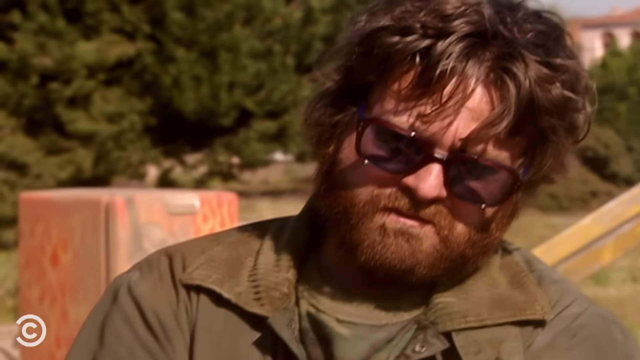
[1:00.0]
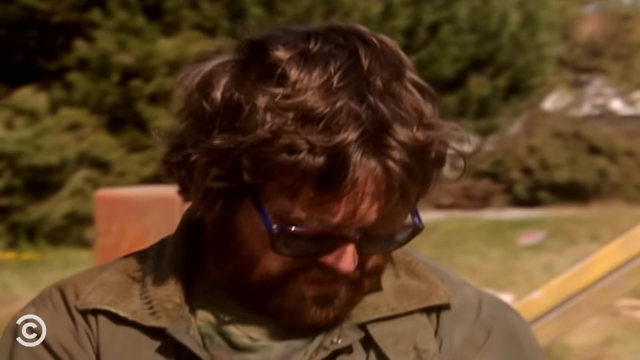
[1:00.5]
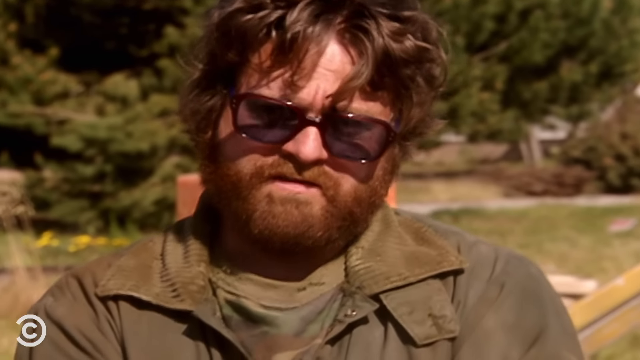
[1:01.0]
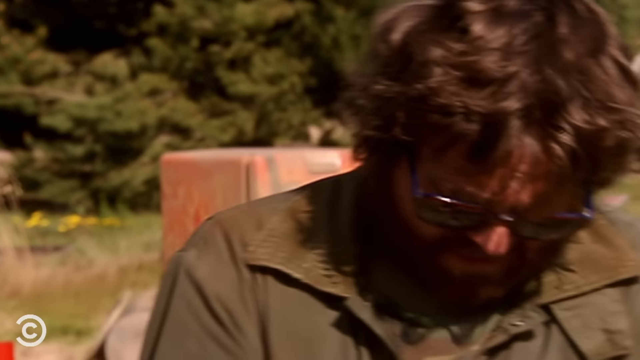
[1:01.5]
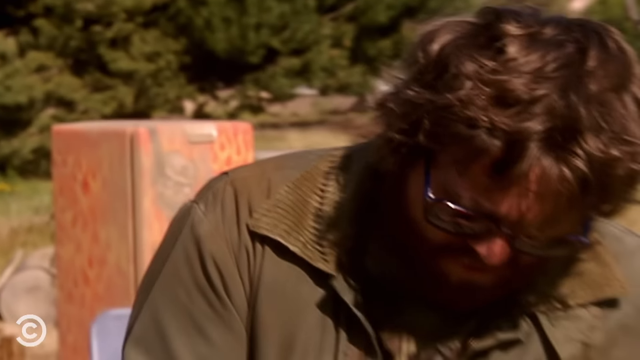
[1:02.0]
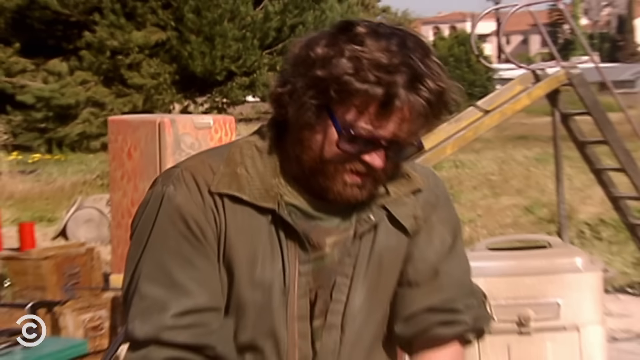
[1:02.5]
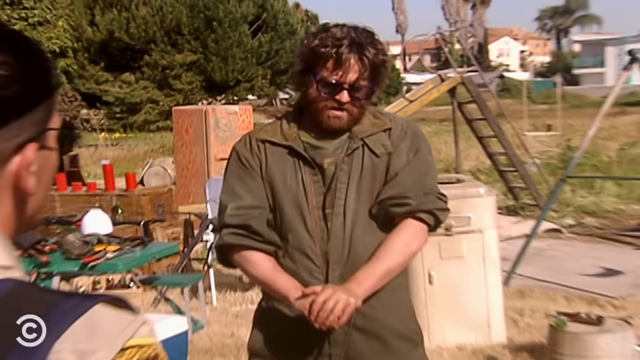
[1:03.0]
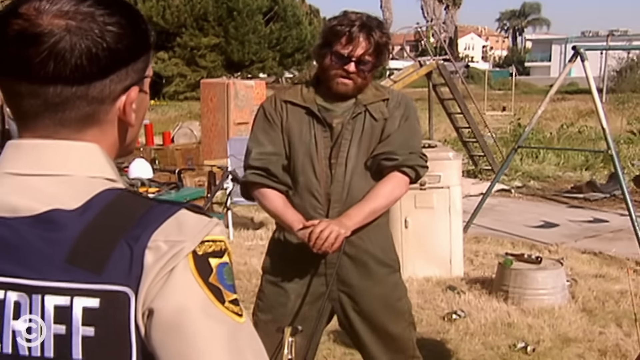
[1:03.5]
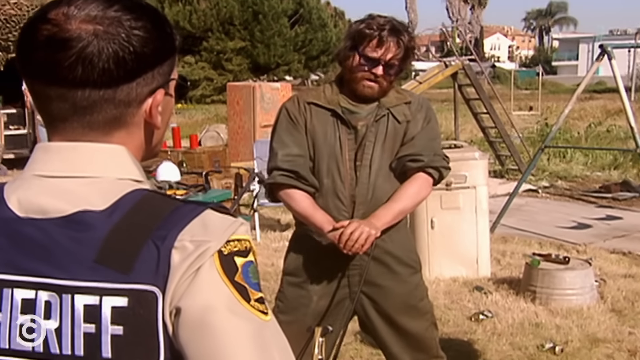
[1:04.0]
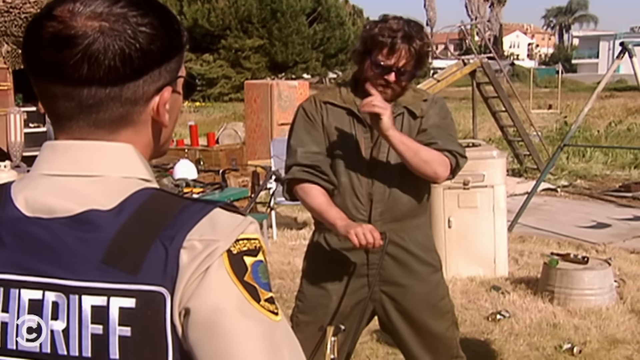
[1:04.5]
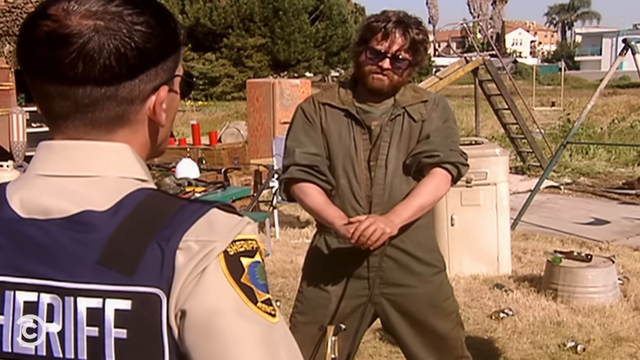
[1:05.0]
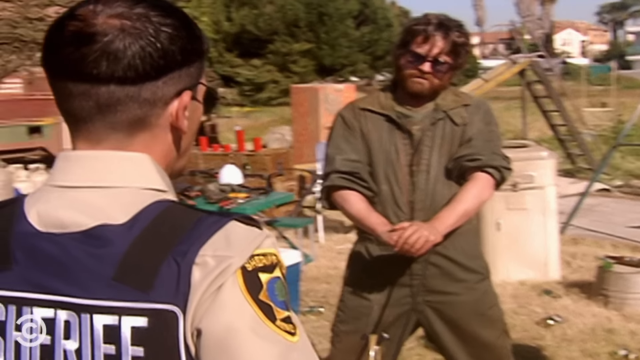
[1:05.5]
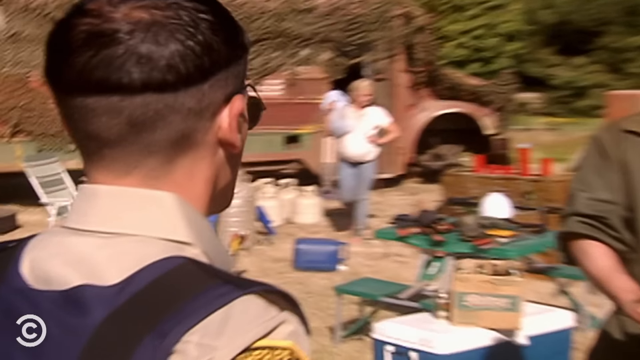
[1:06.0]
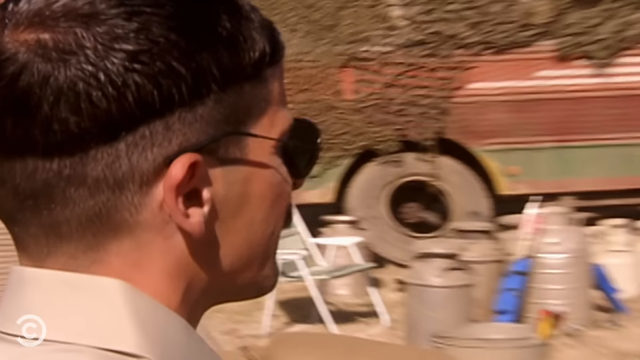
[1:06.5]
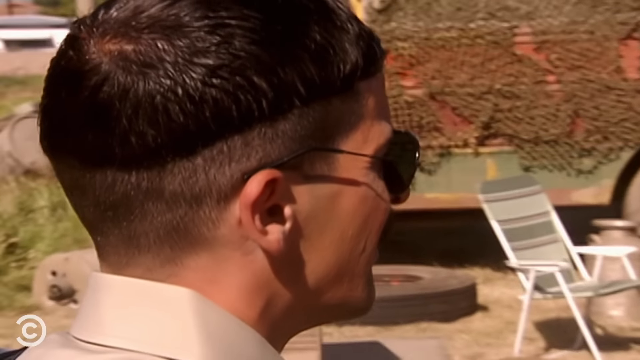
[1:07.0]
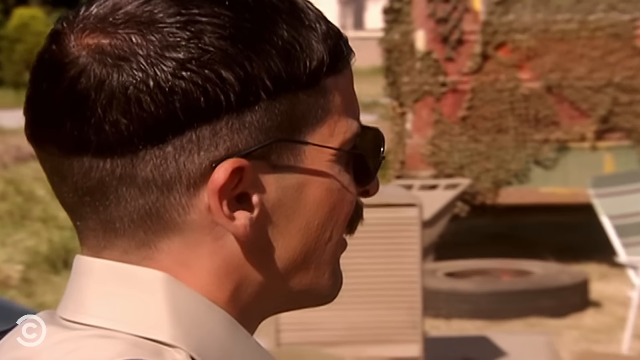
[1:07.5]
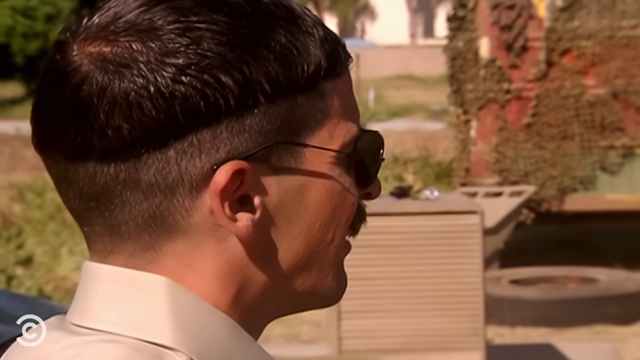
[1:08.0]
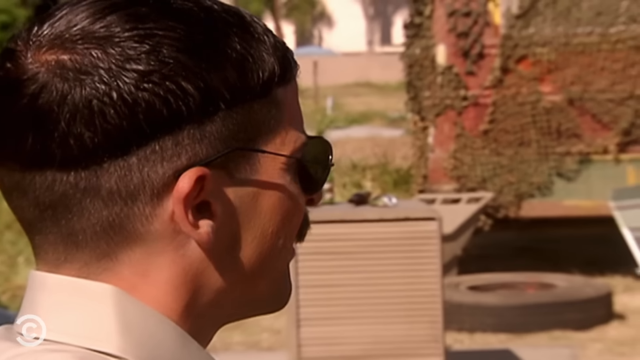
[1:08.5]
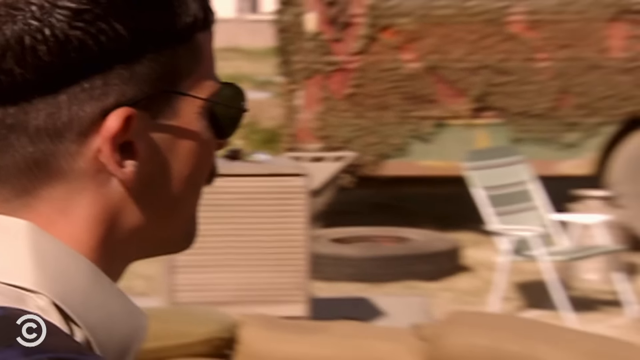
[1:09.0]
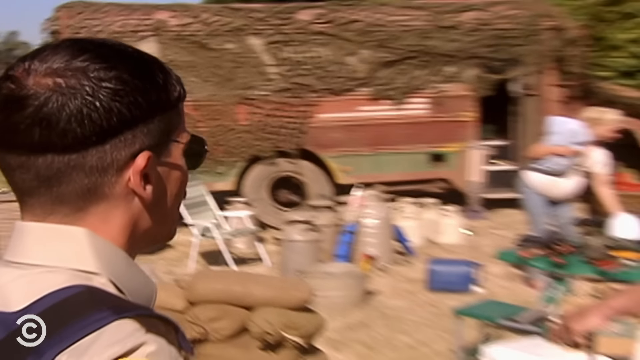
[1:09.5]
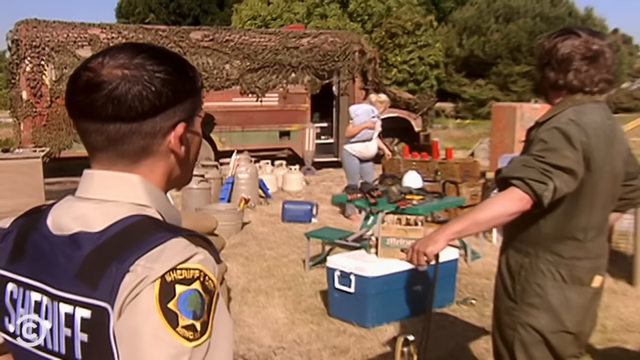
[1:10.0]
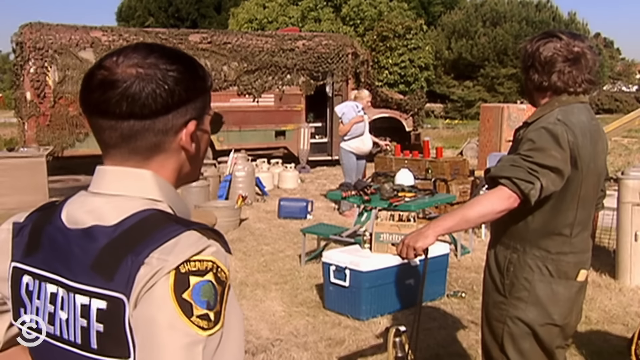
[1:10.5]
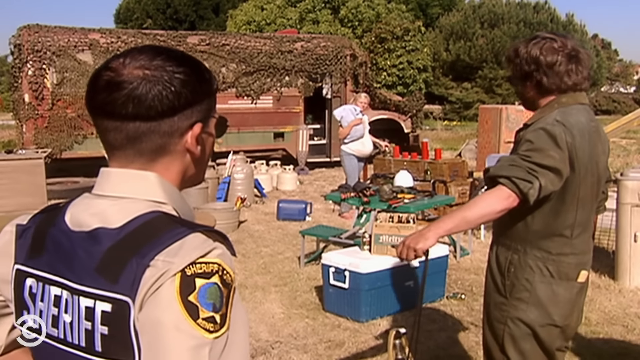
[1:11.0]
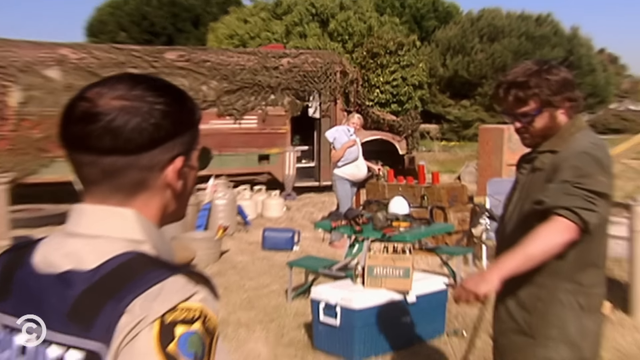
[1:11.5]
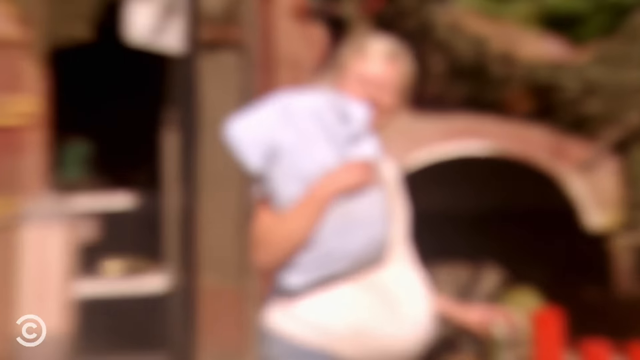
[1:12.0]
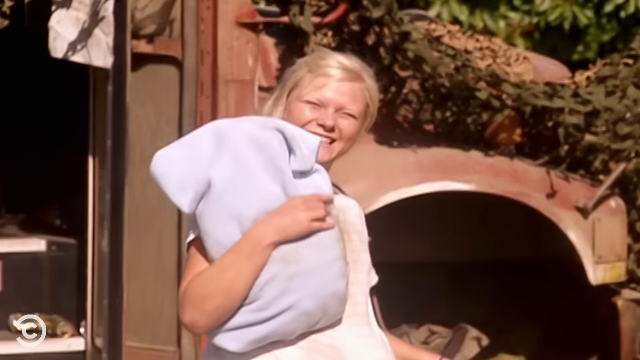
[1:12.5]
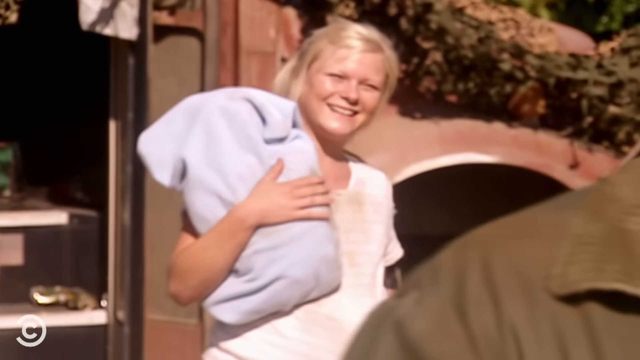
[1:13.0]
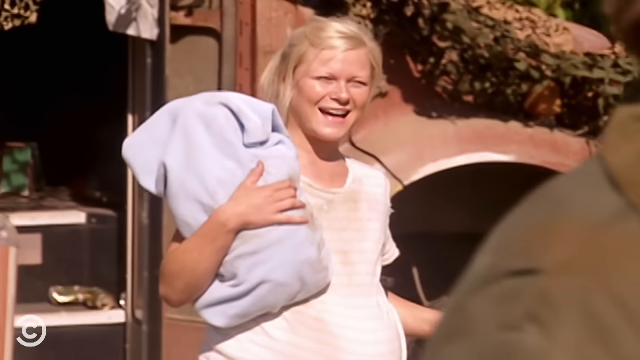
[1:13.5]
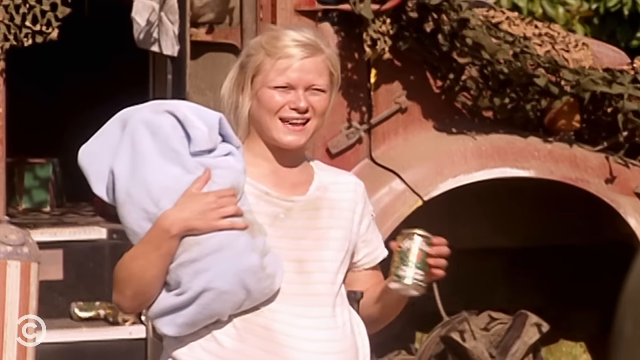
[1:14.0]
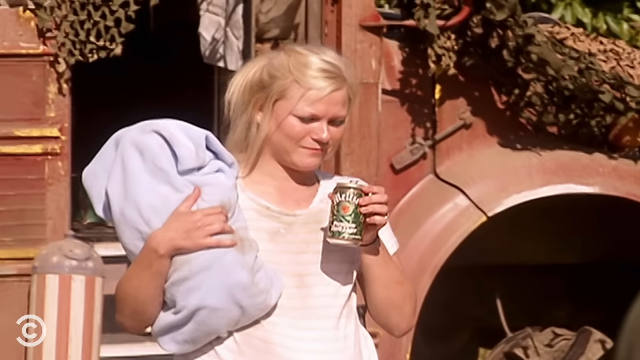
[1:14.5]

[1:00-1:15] The guy in the jumpsuit talks; the shot starts as a close-up on his face and sort of zooms out. He is still talking to the cop with the blue vest, still leaning on something and making hand gestures. The shot then zooms in on the cop, sort of the side of his face but still sort of a back profile. A zoomed-out shot follows with the cop, the guy in the jumpsuit, and the pregnant woman in the background. It then zooms in on the pregnant woman: she is blonde, wears a white shirt, and holds a baby in a blue blanket. She smiles and waves at the cop, then grabs what looks to be a beer can from one of the tables and takes a sip. The tables are really cluttered: there is a green picnic-type table with stuff on top of it and another table with red things on it. There is also a fridge, camping chairs and tires; it is a messy area. The woman looks far less confrontational than the men and the cops as she smiles and waves.